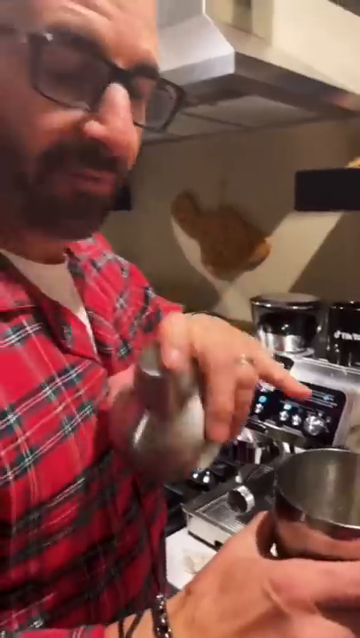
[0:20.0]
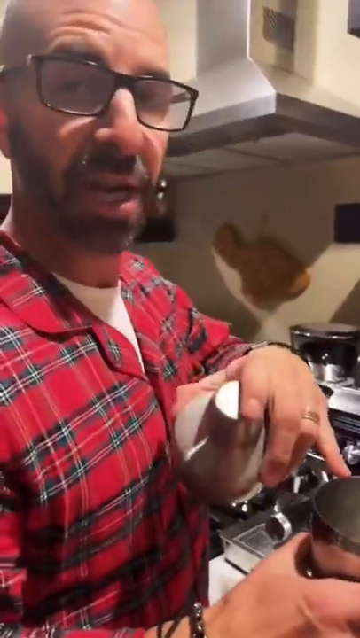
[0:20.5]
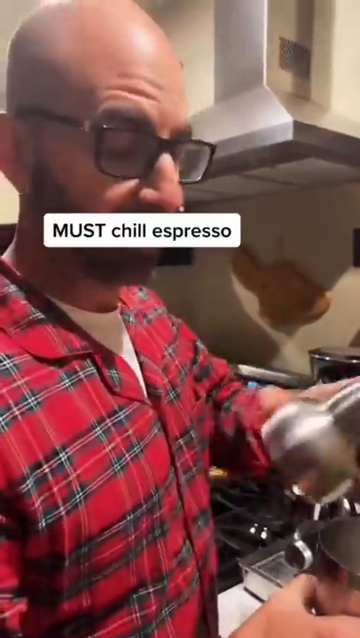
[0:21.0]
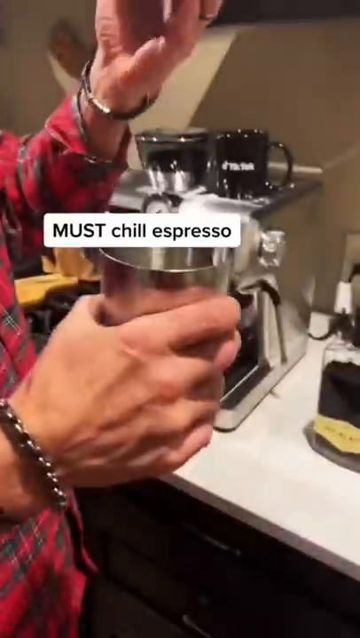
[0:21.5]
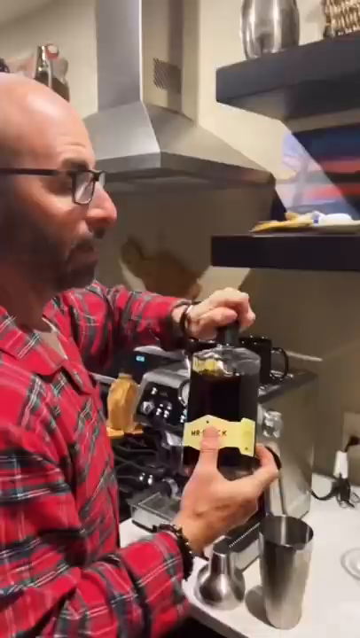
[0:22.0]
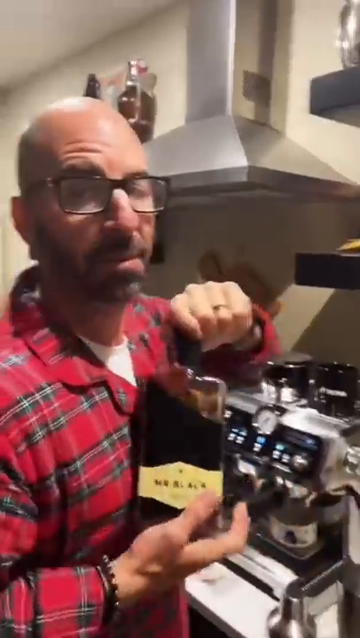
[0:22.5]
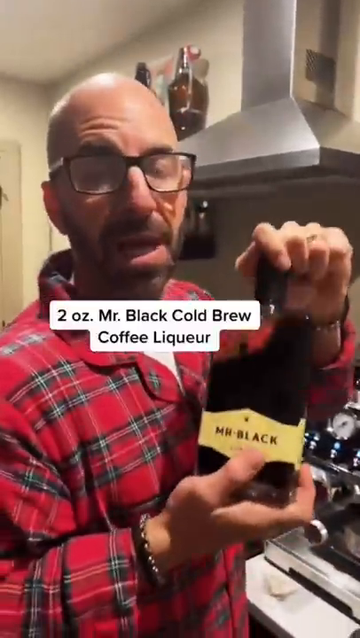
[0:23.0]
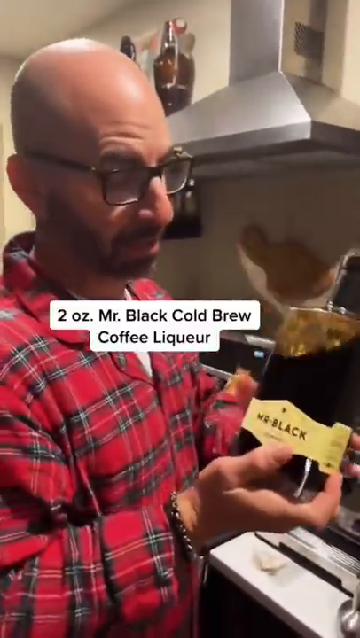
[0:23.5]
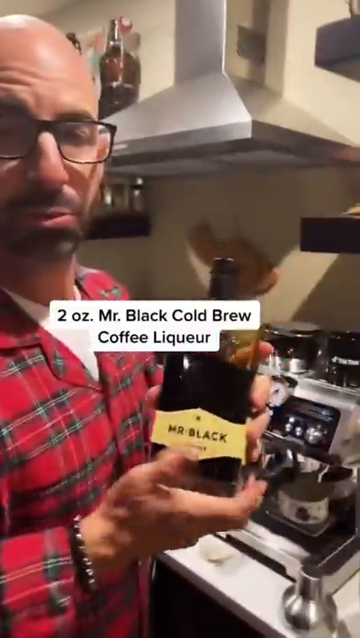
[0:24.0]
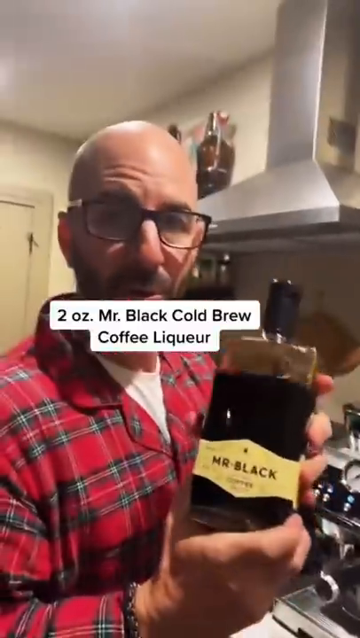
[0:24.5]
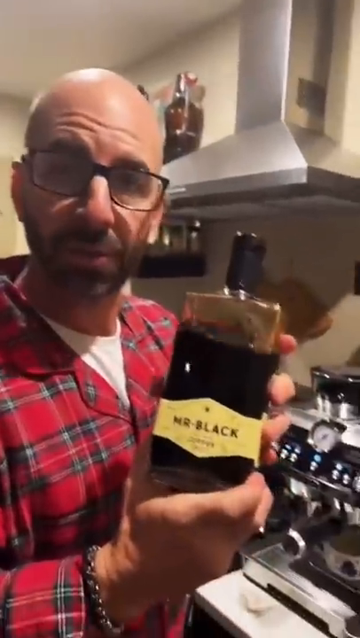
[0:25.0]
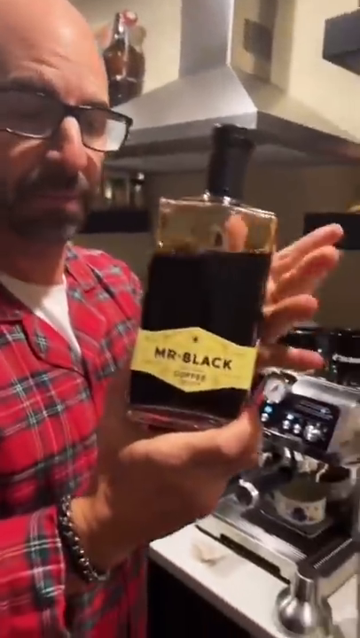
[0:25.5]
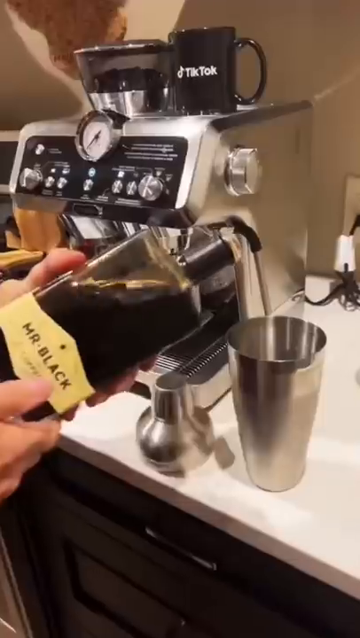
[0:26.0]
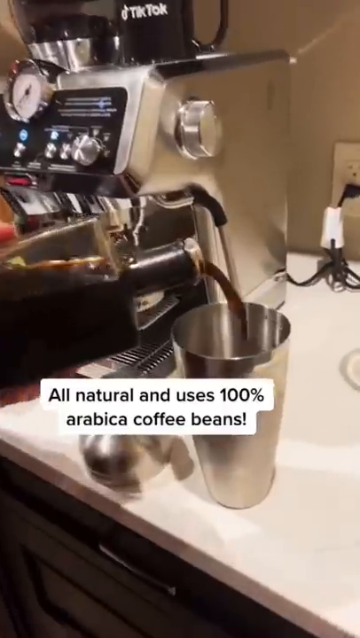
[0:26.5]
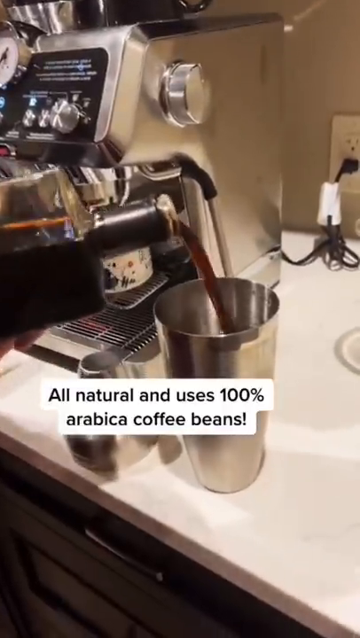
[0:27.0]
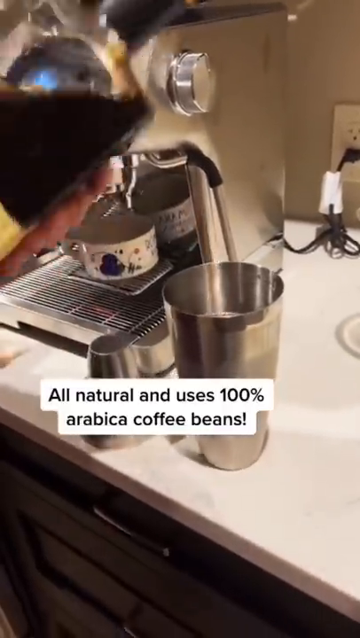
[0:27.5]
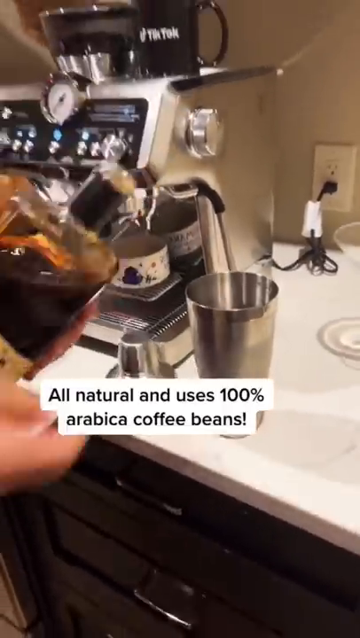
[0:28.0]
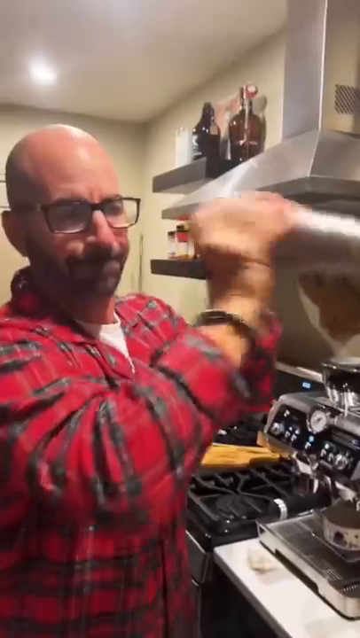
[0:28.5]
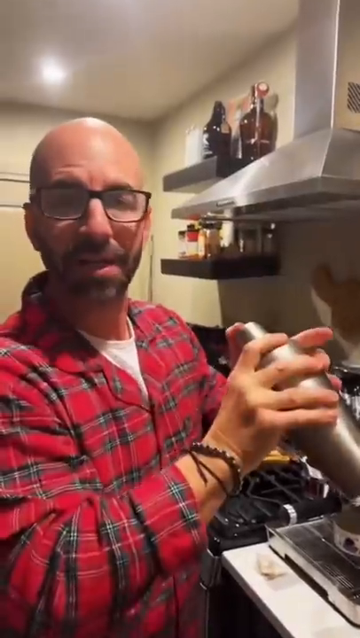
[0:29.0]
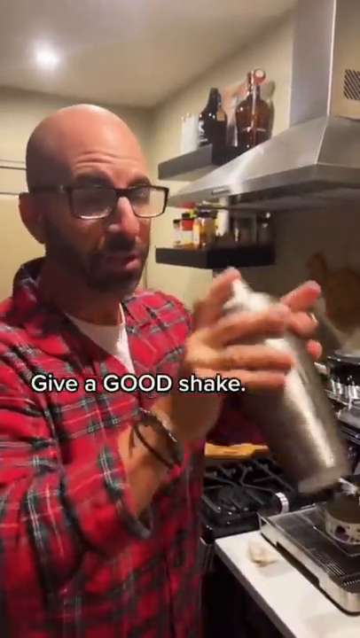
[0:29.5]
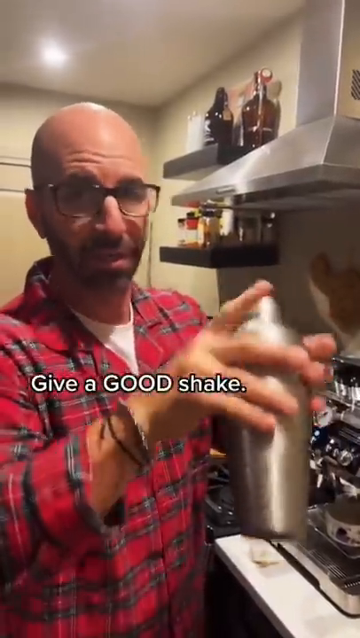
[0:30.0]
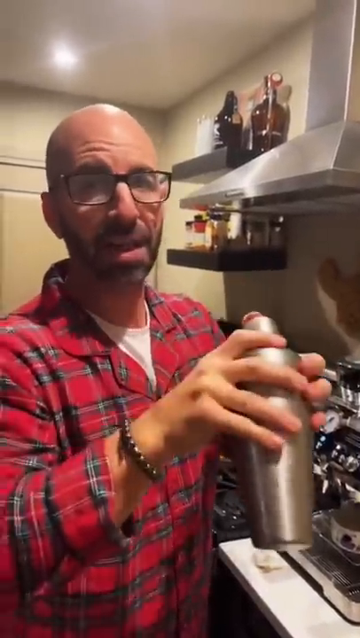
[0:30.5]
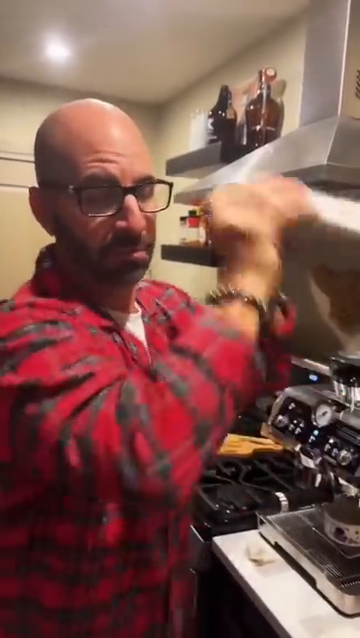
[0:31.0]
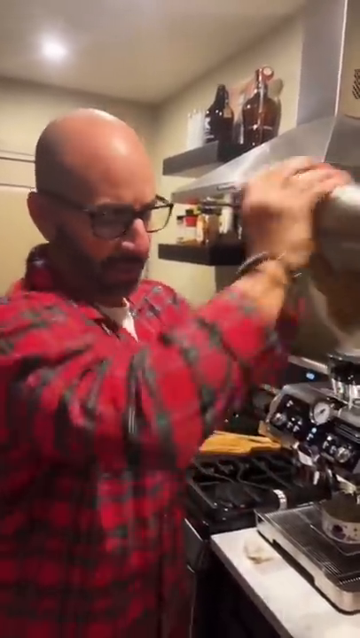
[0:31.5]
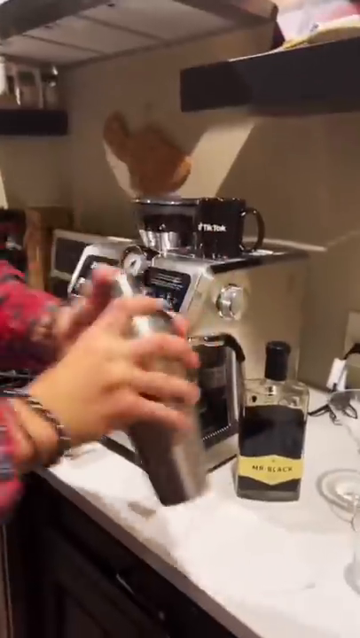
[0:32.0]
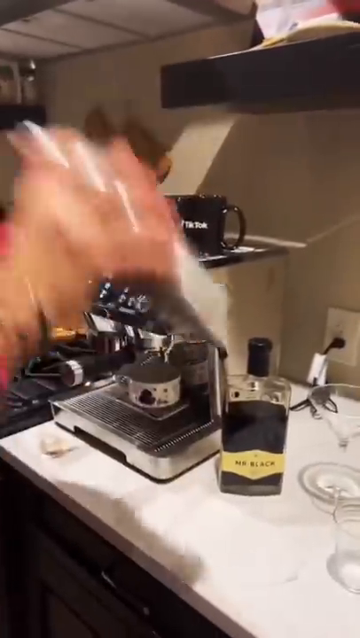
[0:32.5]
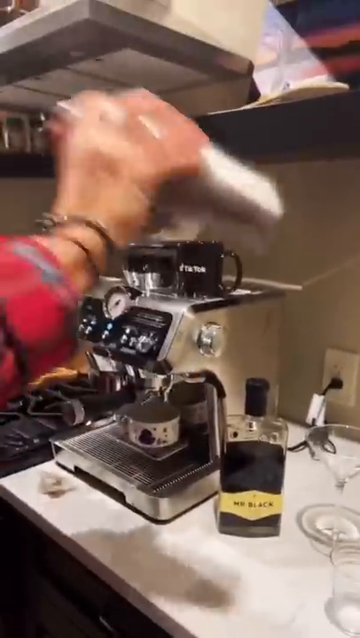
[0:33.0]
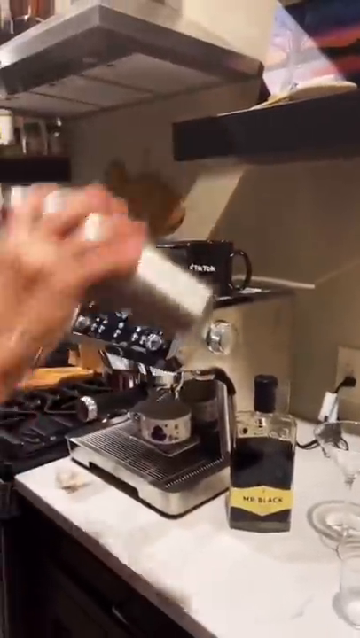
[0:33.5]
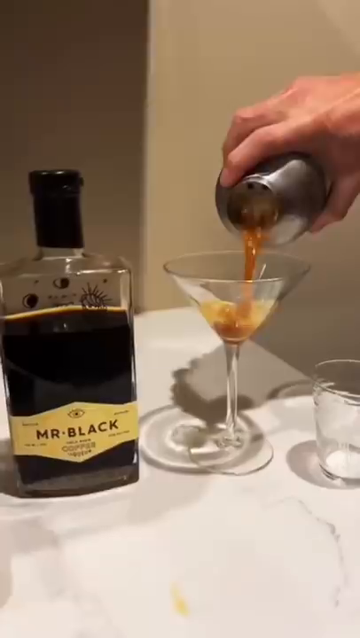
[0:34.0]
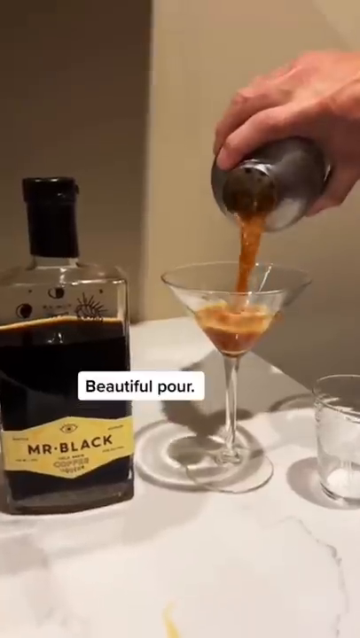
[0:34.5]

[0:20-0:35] The man holds in his left hand sort of a cover or cap that looks like part of a martini kind of shaker, and in his right hand the lower part, a silver shaker-type piece. He holds up a square, black bottle of some sort of liquor labeled "MR Black" and pours some of the liquid into the silver shaker. Text reads "all natural beans" and "100% arabica". The words "give it a good shake" come up as he shakes the shaker. He then pours the liquid into a large, clear martini glass, where it kind of foams up a little; the glass is almost full, and he pours the rest of the liquid in.